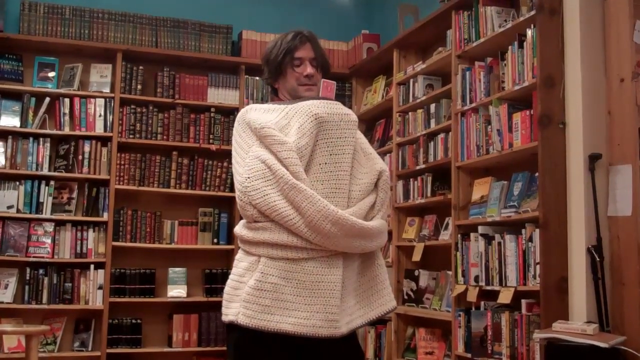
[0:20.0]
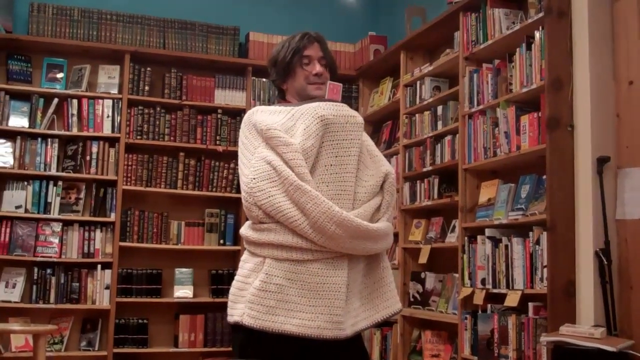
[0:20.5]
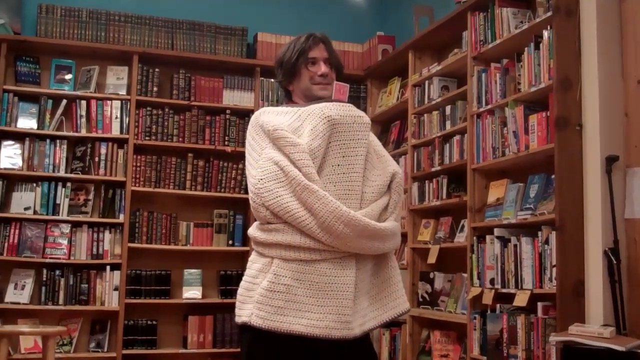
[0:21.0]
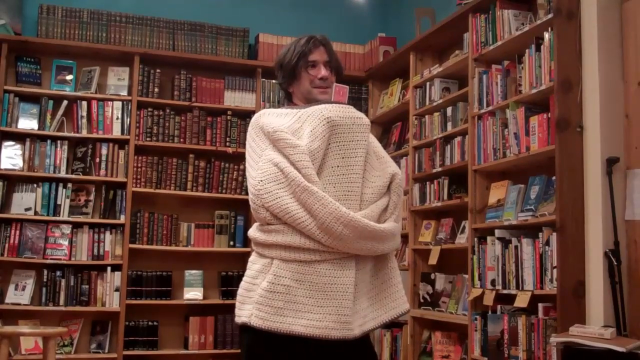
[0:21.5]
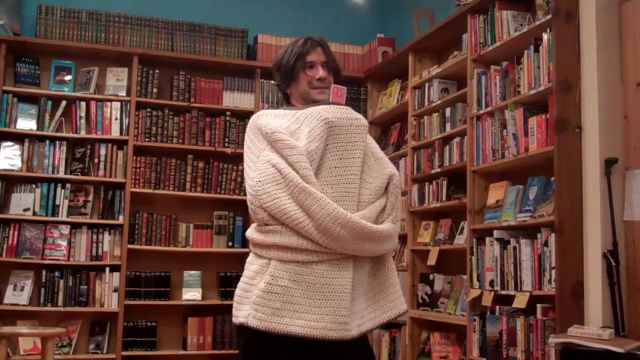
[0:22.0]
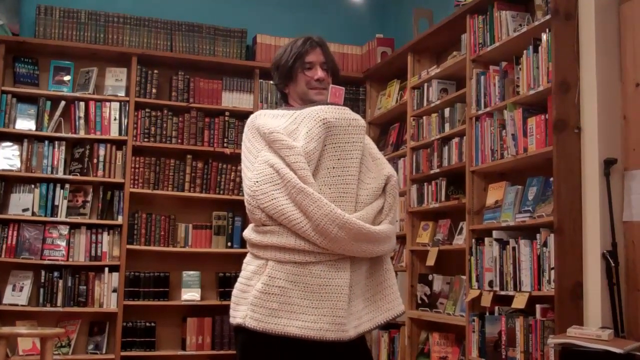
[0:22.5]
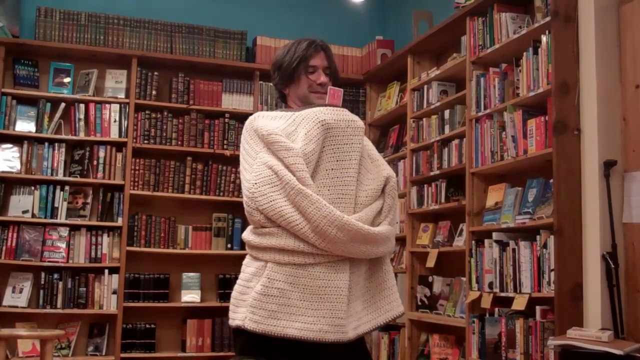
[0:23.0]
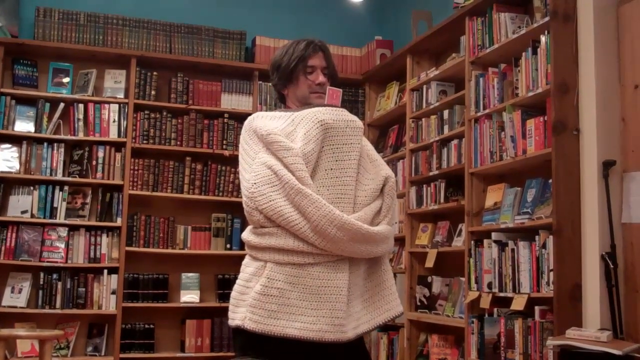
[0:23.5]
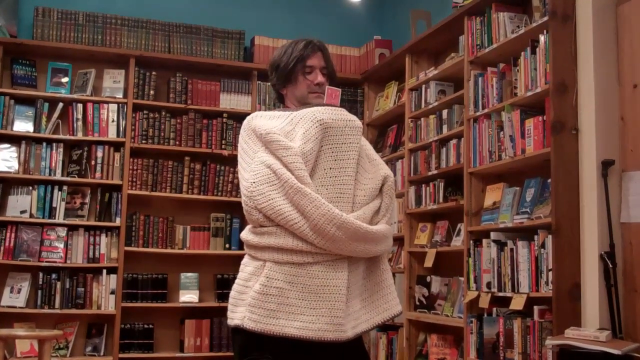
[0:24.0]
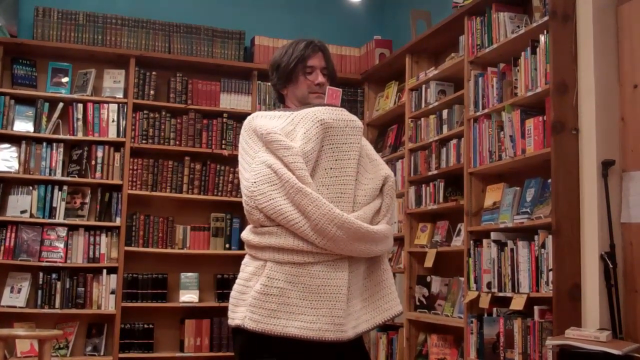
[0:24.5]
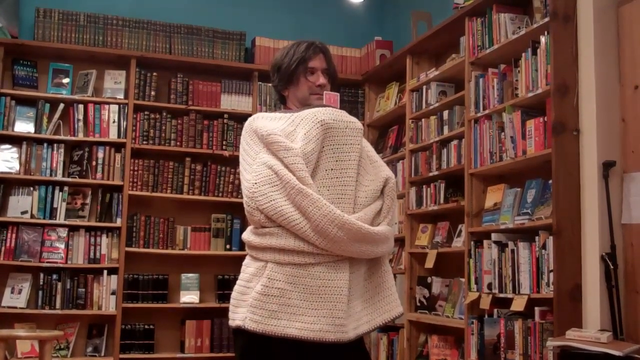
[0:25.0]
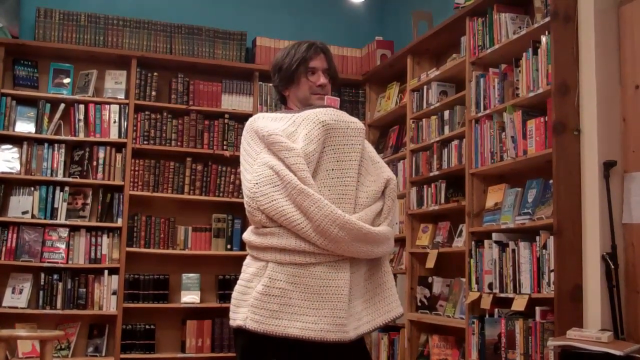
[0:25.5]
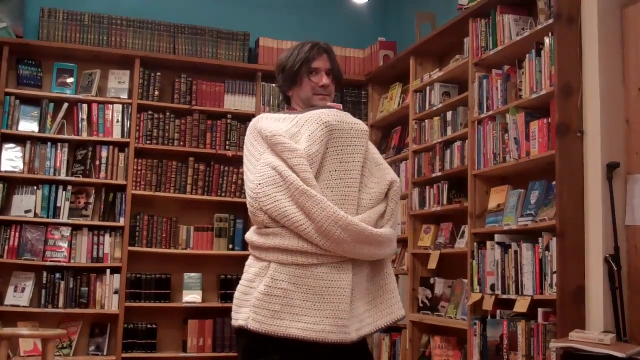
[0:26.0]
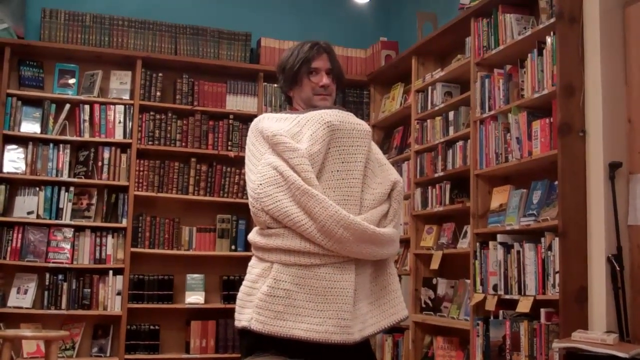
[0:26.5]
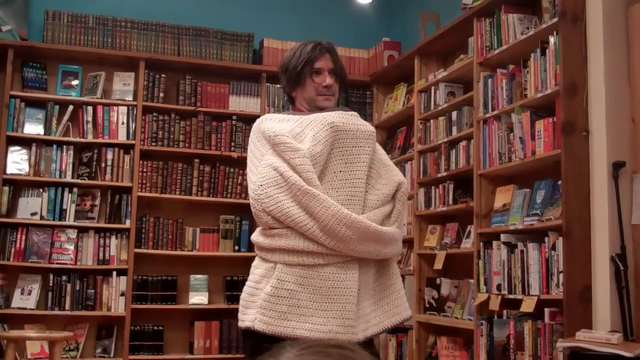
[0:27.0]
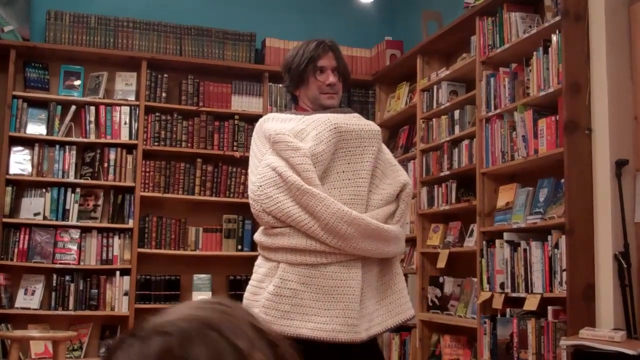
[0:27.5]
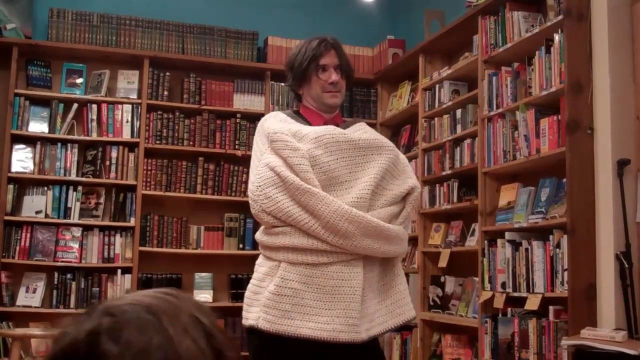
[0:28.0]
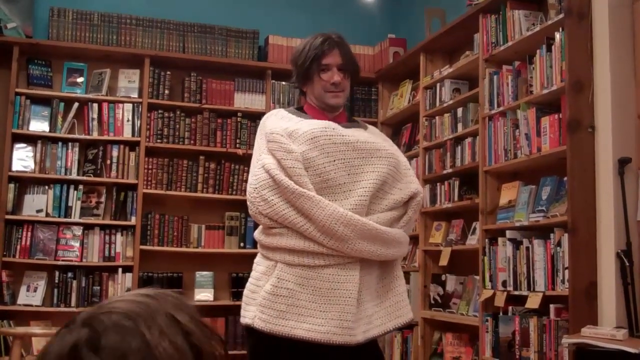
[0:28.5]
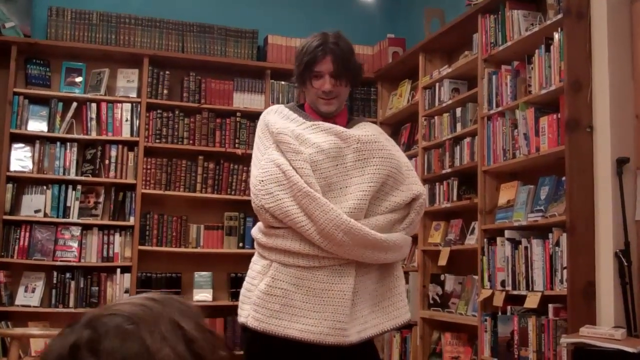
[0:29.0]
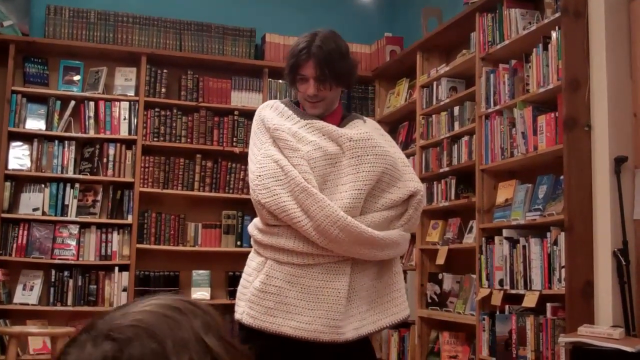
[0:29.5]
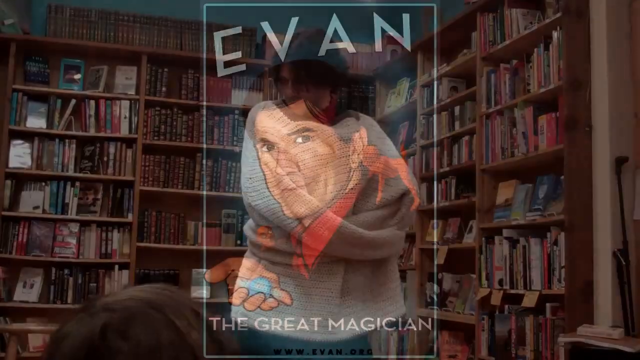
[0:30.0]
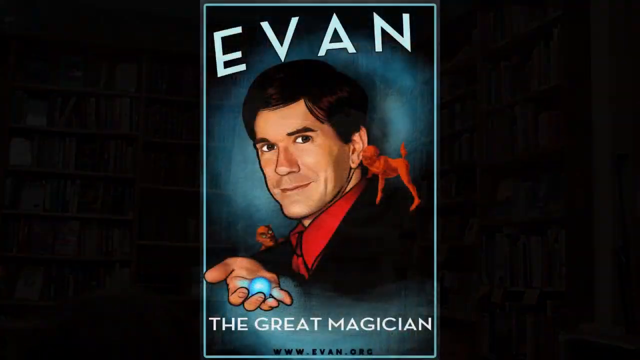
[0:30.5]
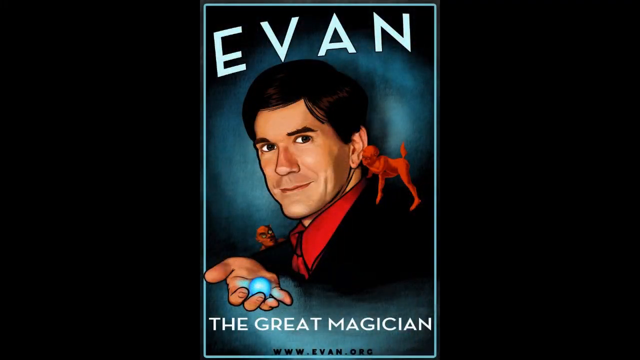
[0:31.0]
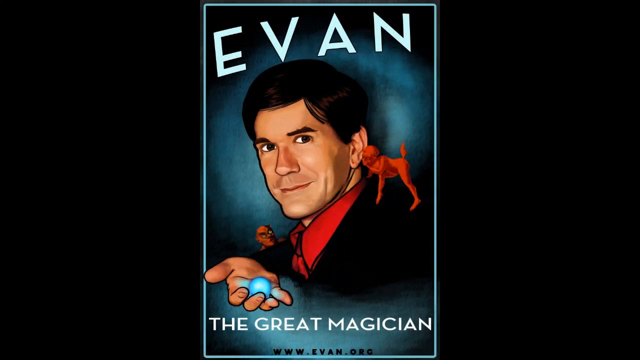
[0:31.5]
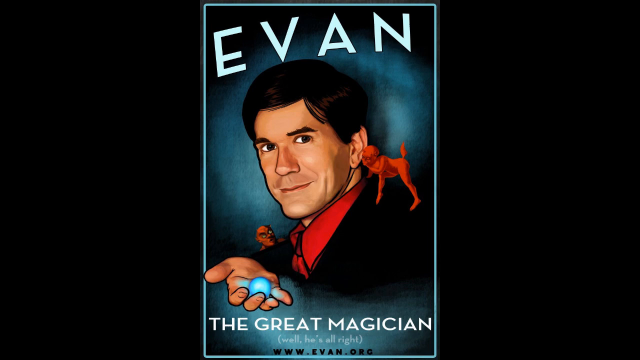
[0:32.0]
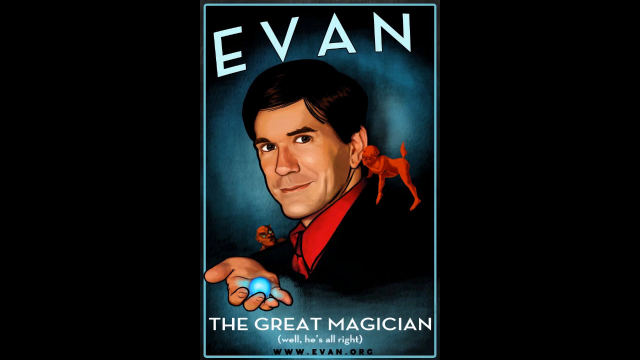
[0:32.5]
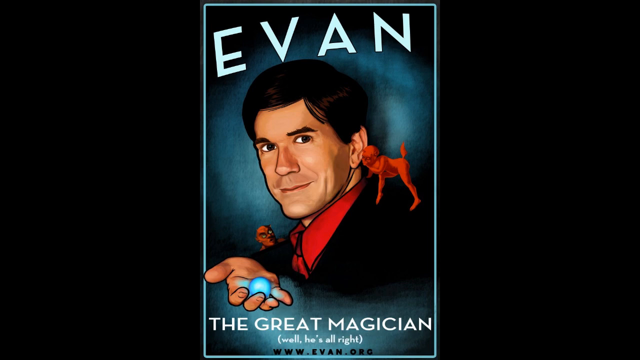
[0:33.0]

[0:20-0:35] The man in the straitjacket is still fastened into it. His arms are not in the arm parts of the straitjacket but in the middle, as he holds a card up to his face for a trick he is doing for the audience. He is saying something to them about the card he is holding up. A piece of artwork saying "Evan" appears on the screen with a picture that looks like the man, suggesting he is the Evan from the beginning of the video. He is some sort of magician performing for a crowd of people.